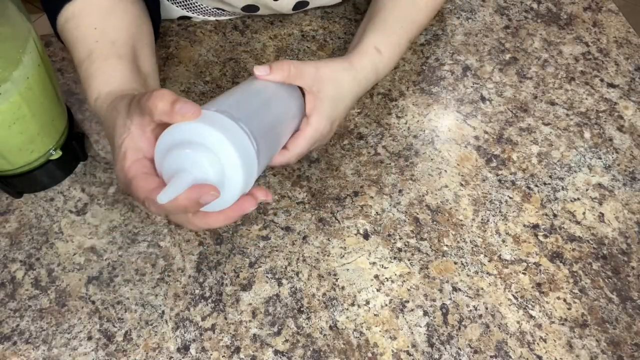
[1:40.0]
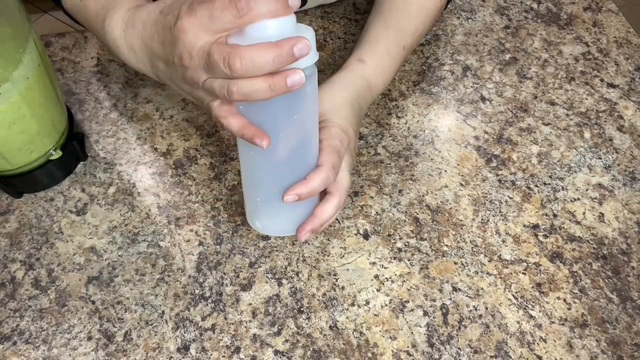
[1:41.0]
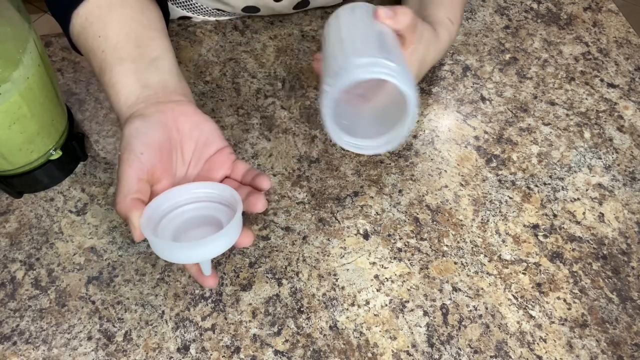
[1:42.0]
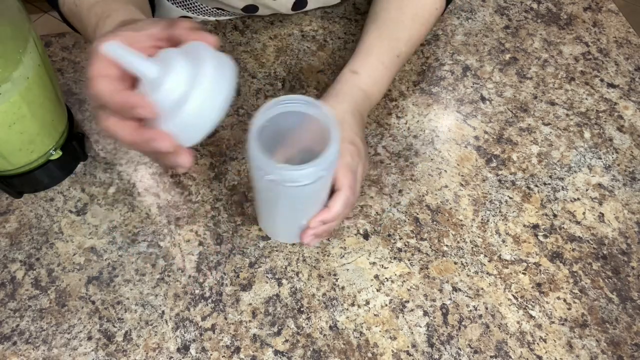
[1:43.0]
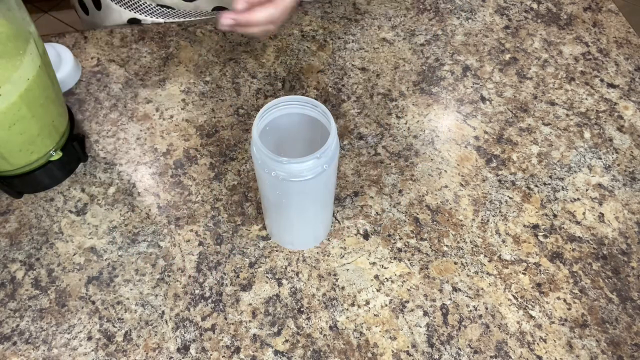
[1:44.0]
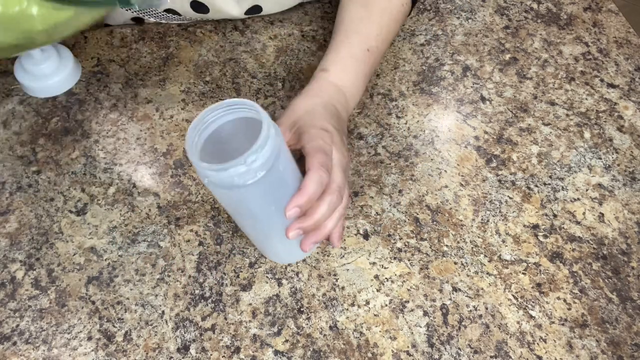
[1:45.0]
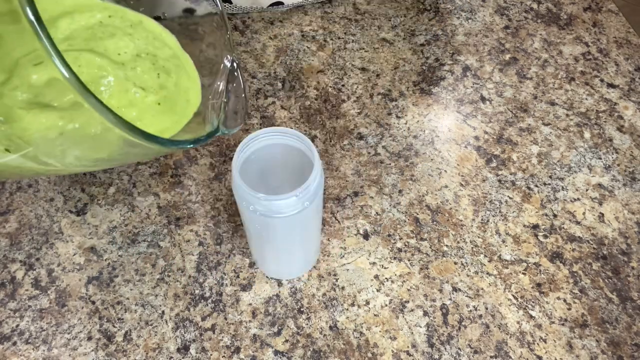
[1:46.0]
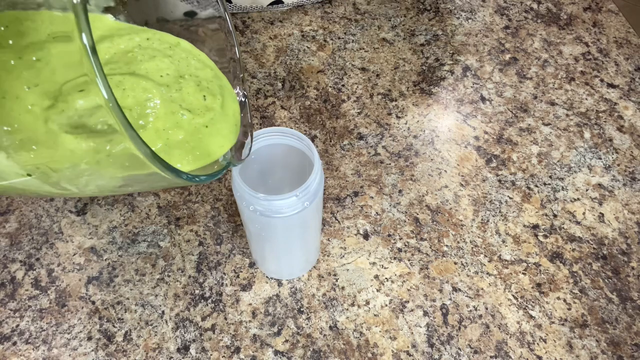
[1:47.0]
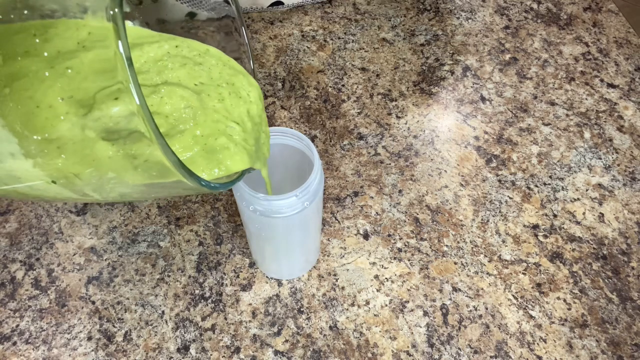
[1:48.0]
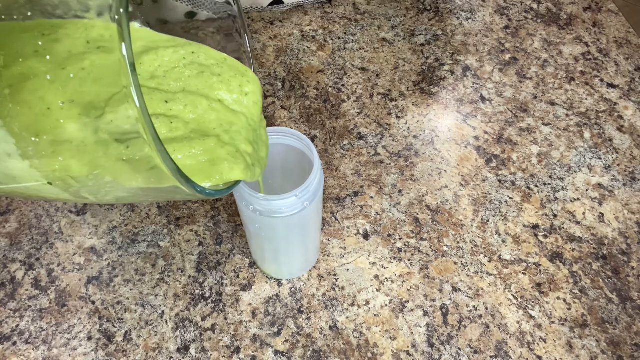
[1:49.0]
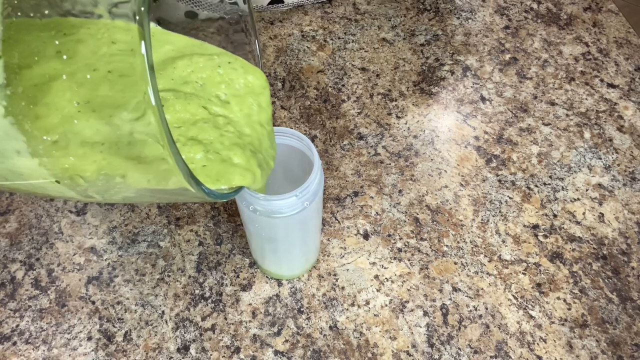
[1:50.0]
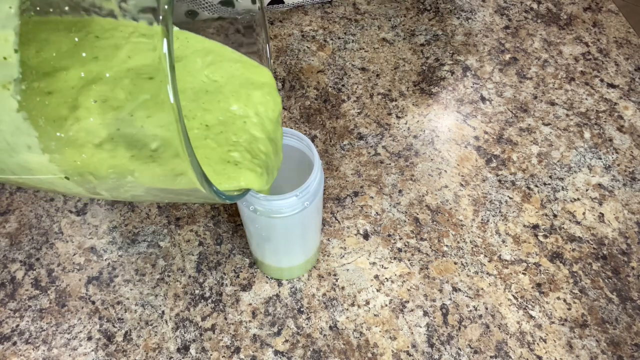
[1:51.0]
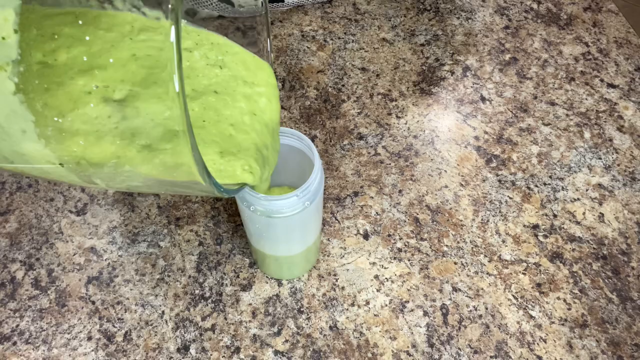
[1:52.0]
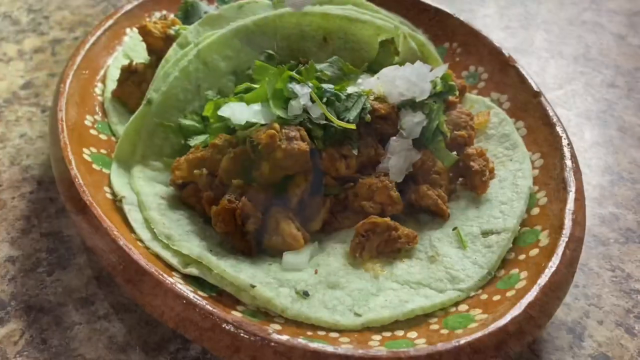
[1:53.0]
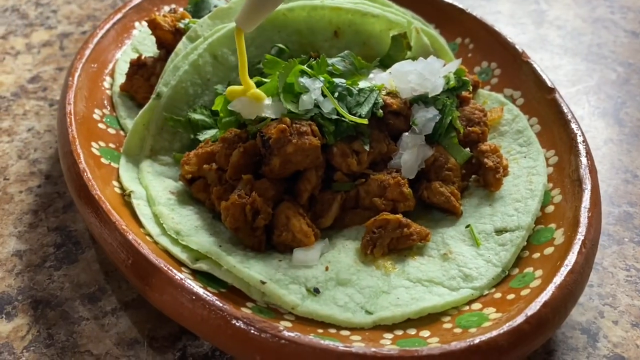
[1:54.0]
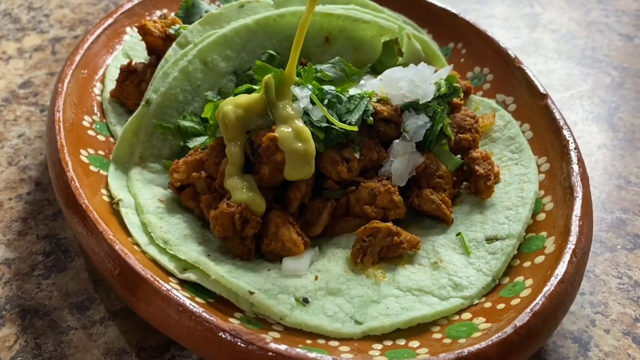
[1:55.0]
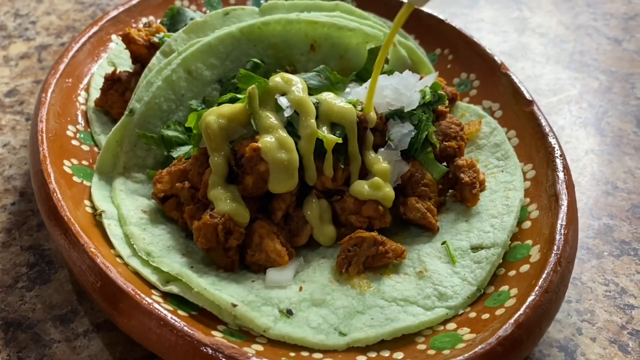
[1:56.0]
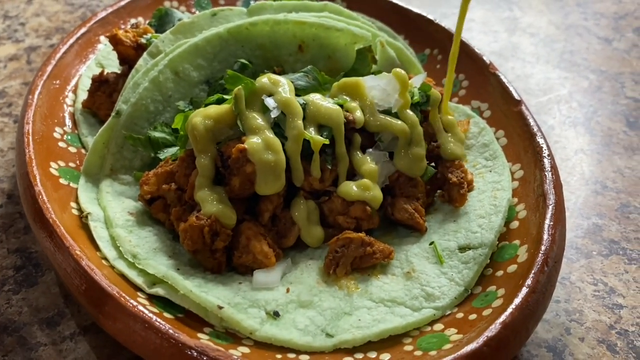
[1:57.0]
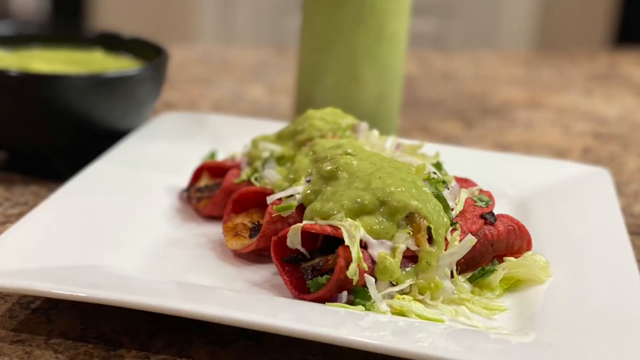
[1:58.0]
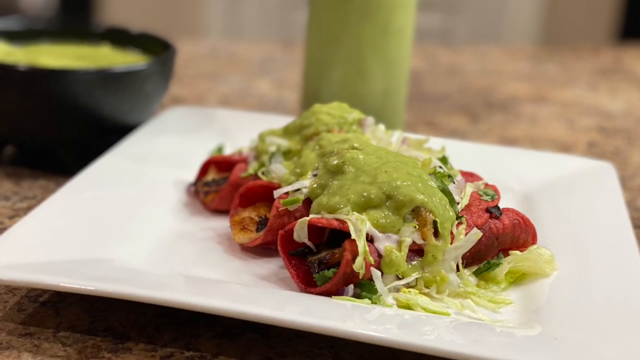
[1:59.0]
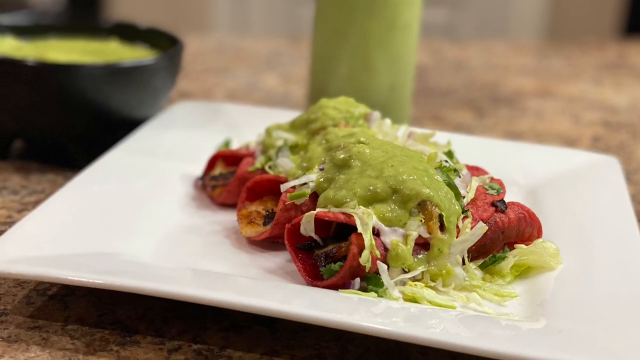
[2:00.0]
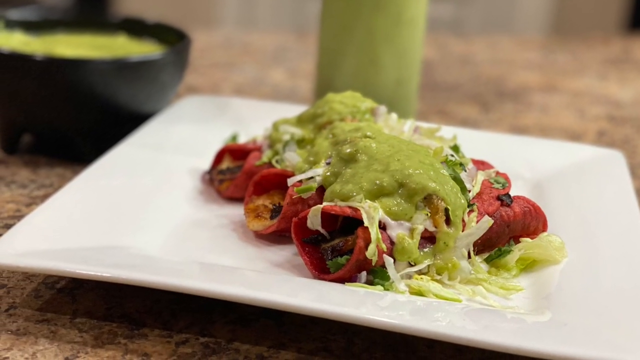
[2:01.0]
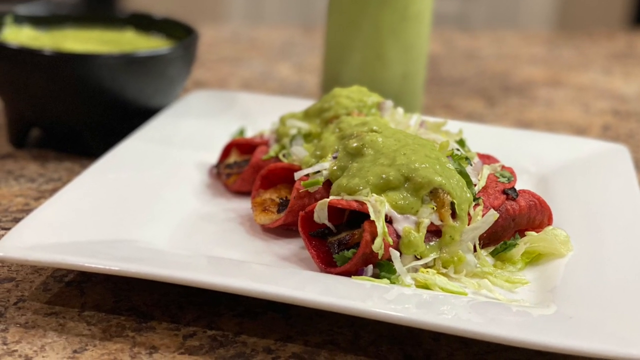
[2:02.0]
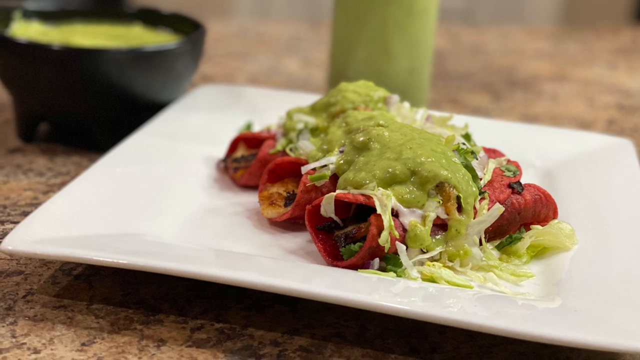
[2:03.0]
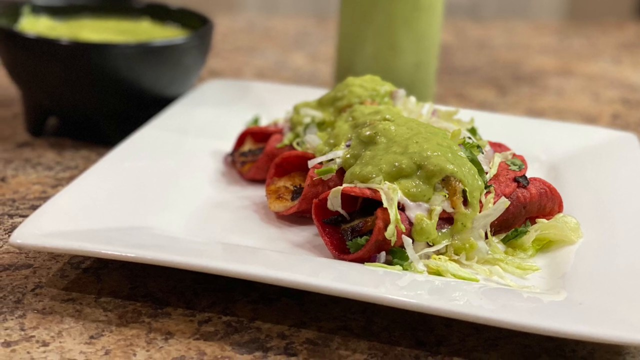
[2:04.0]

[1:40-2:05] A white male holds a plastic cup with both hands over a ceramic tile. With his right hand he takes off the top of the white cup and inspects the inside, then places the tip of the cup onto the table, and begins pouring a green substance out. The scene transitions to a picture and video of enchiladas in a green tortilla with onions and vegetables, as a yellow sauce is poured over the enchilada. The scene then transitions to another enchilada made in a round shape, completely covered in verde sauce, lettuce, and sour cream.